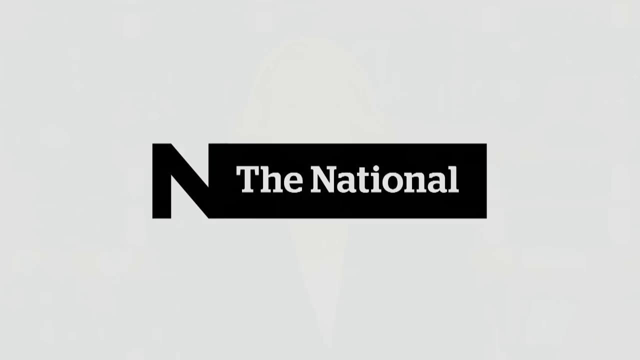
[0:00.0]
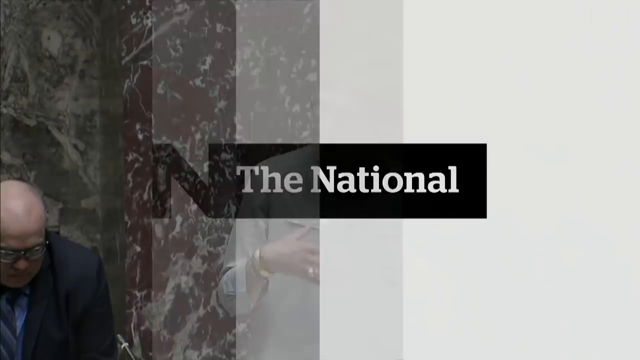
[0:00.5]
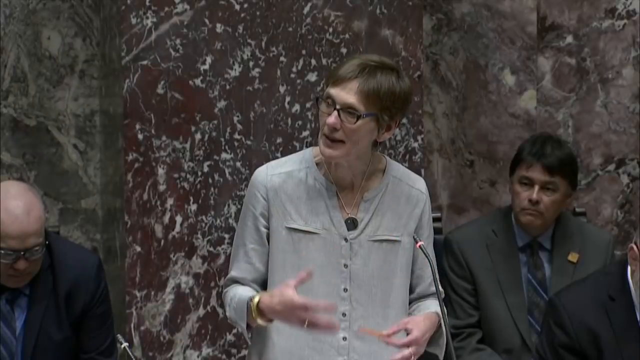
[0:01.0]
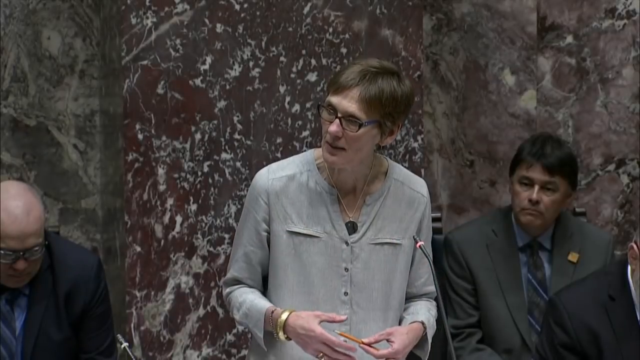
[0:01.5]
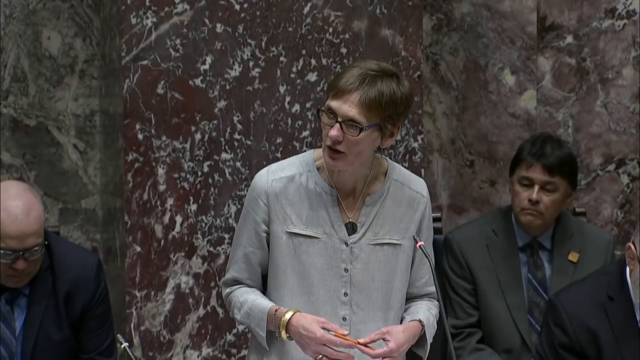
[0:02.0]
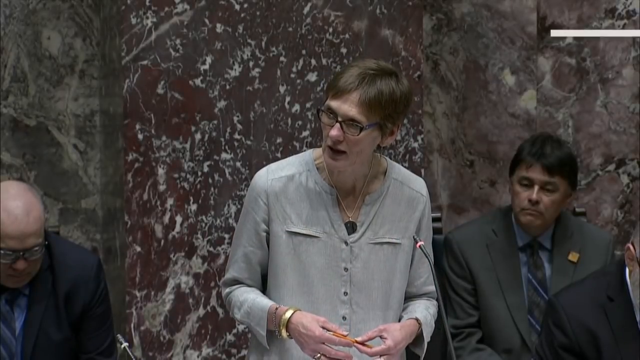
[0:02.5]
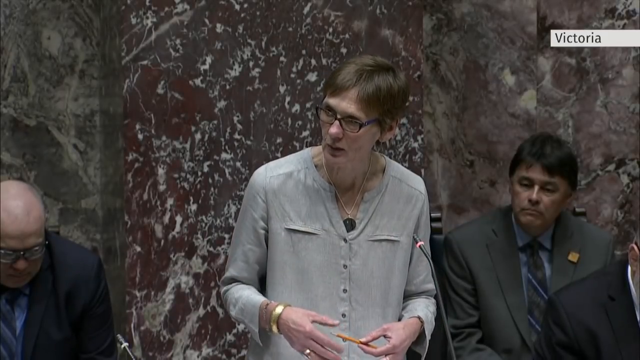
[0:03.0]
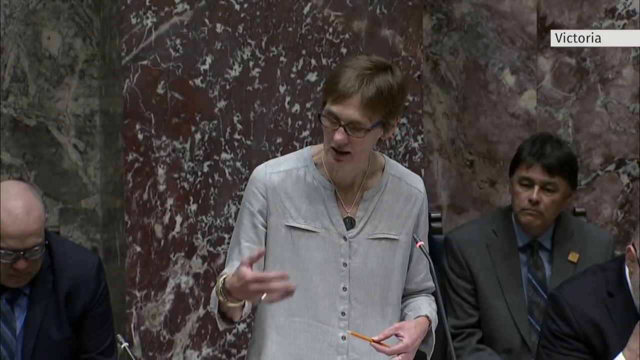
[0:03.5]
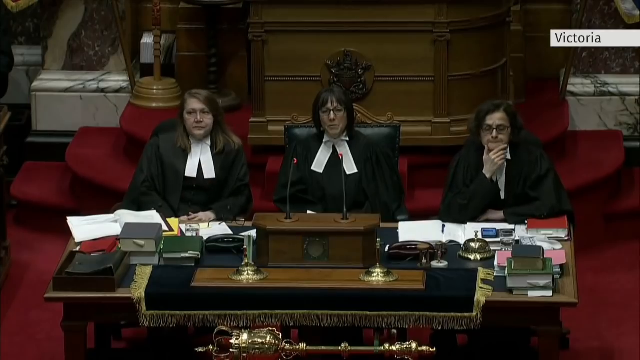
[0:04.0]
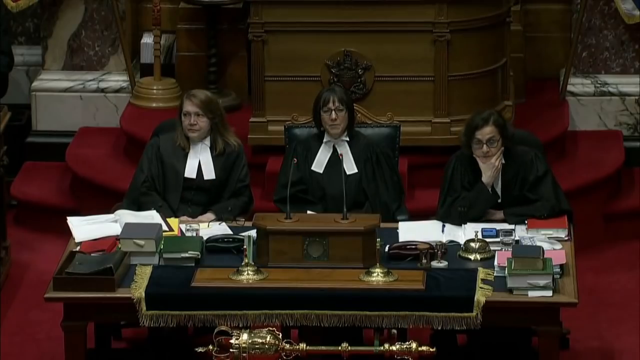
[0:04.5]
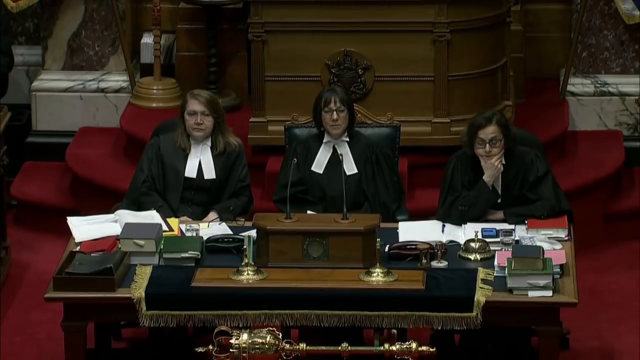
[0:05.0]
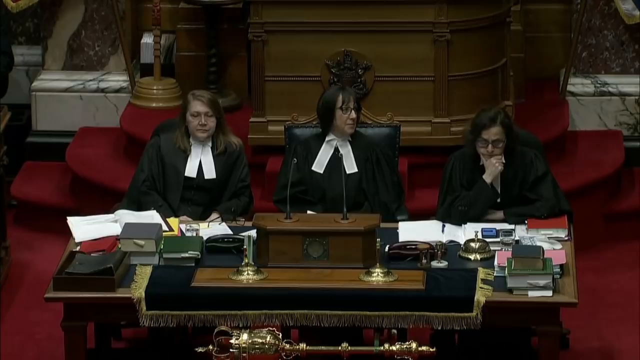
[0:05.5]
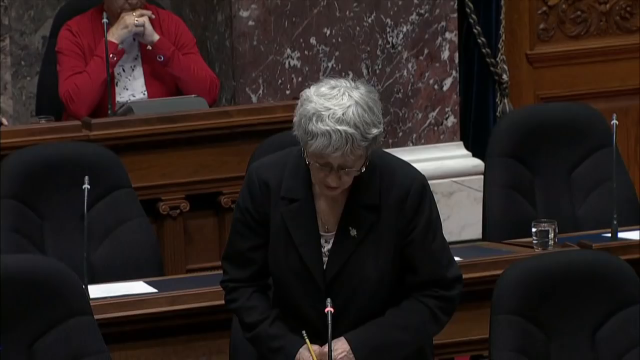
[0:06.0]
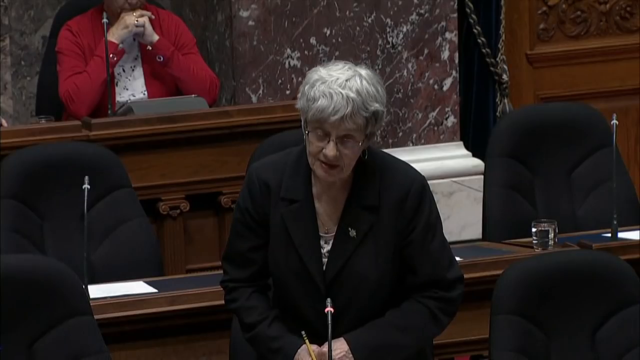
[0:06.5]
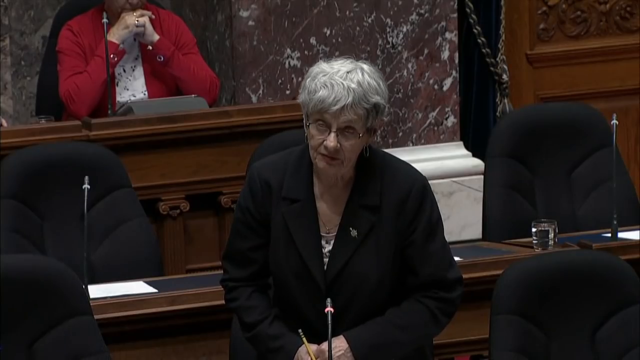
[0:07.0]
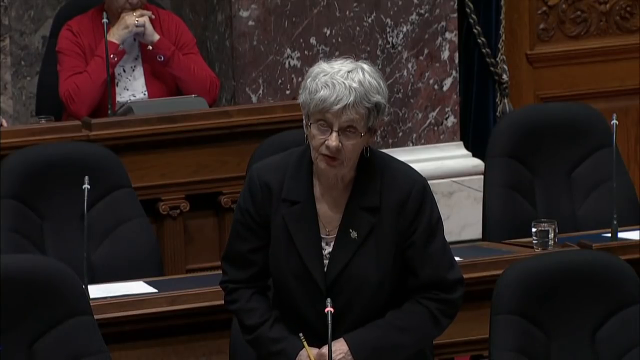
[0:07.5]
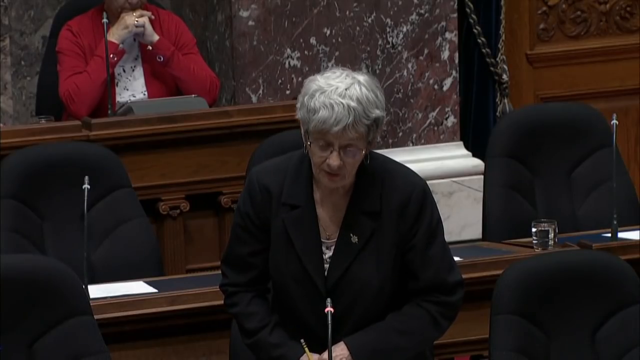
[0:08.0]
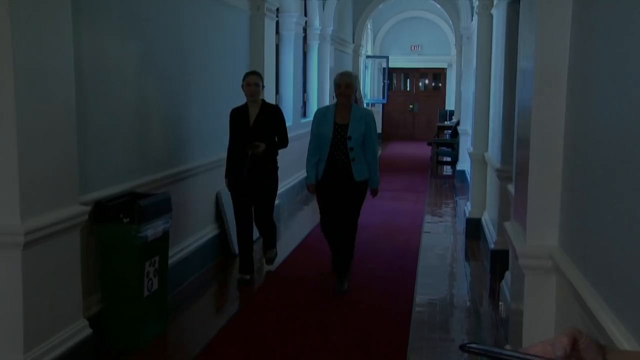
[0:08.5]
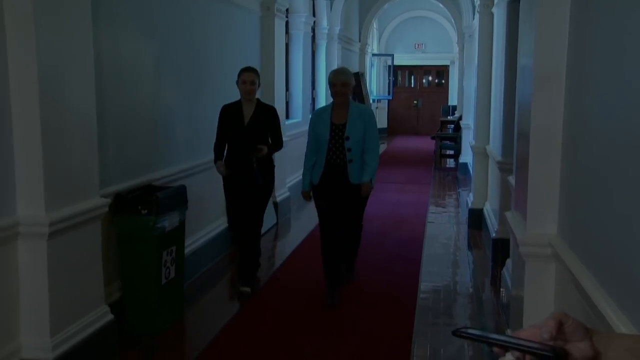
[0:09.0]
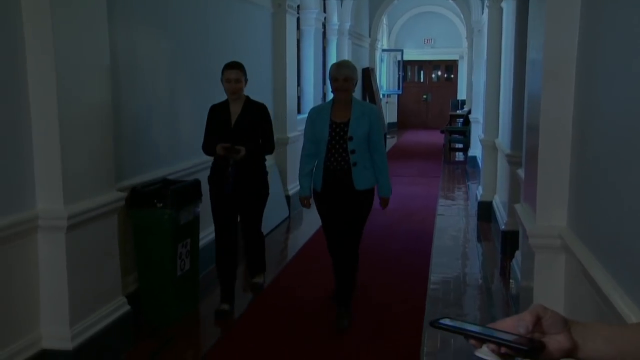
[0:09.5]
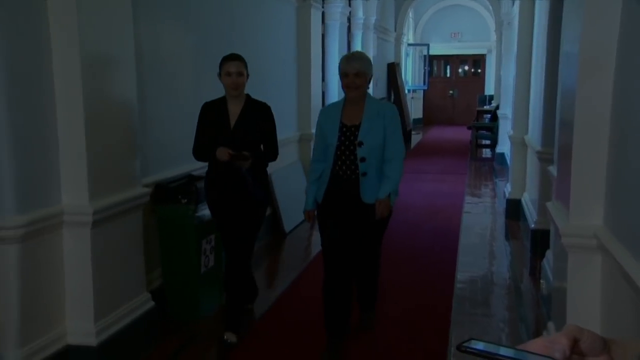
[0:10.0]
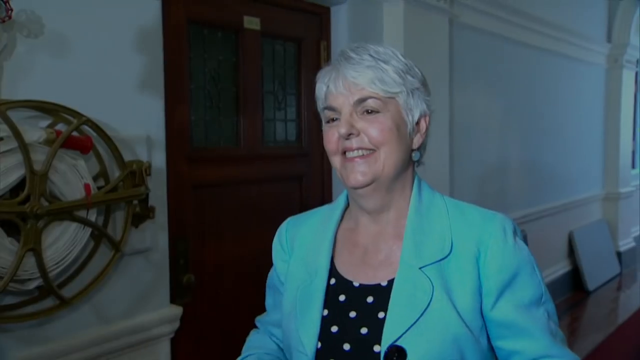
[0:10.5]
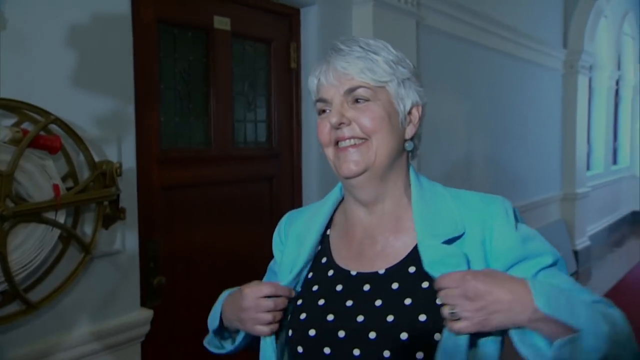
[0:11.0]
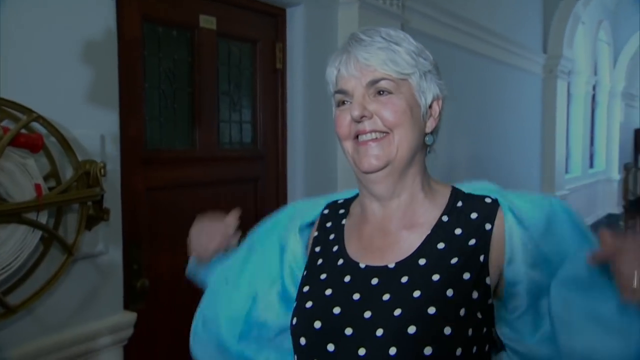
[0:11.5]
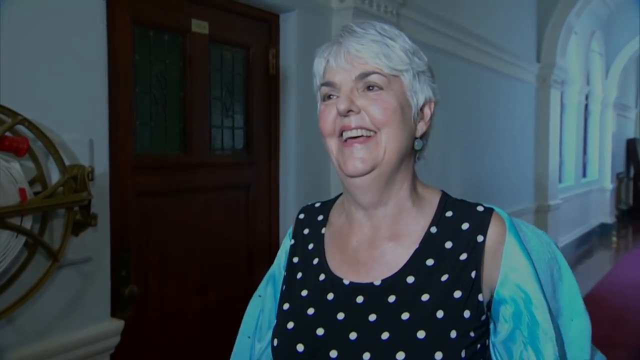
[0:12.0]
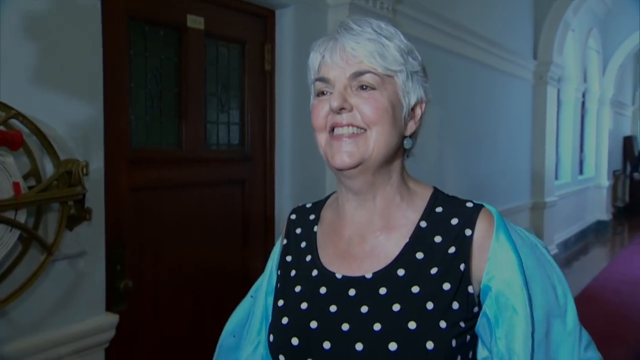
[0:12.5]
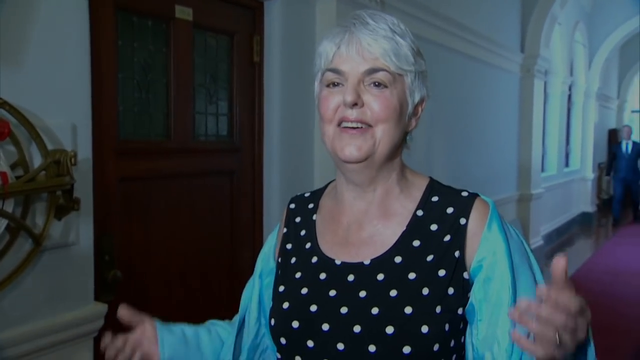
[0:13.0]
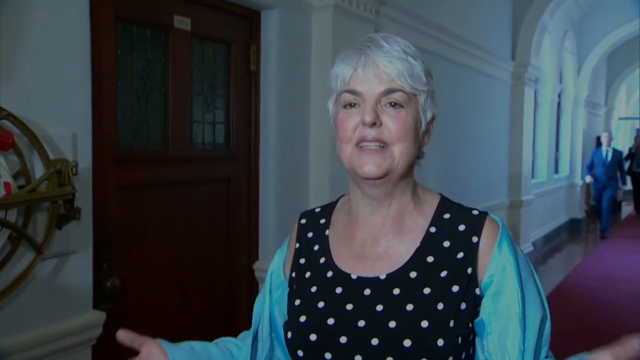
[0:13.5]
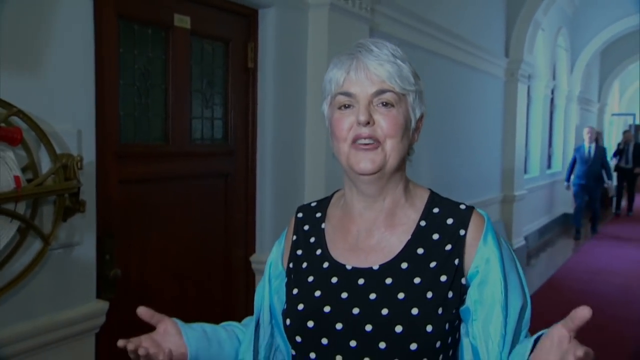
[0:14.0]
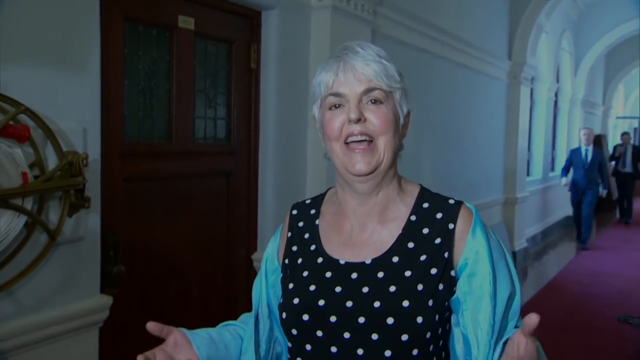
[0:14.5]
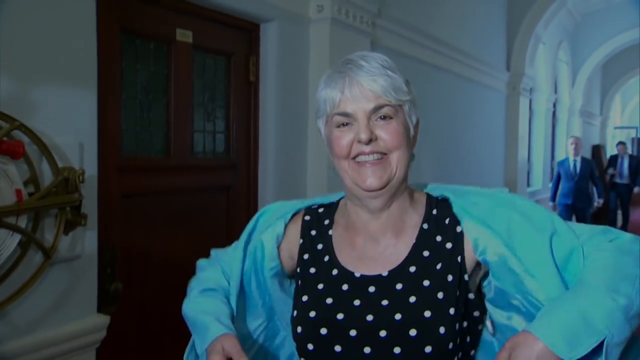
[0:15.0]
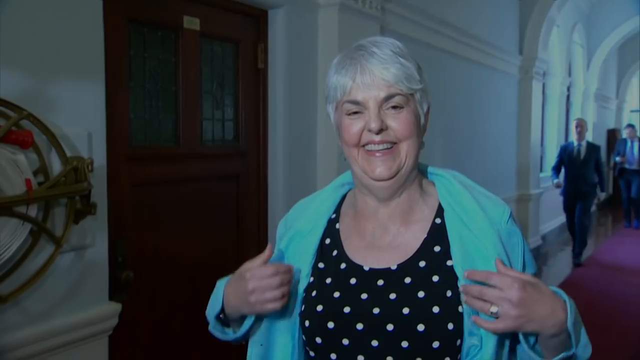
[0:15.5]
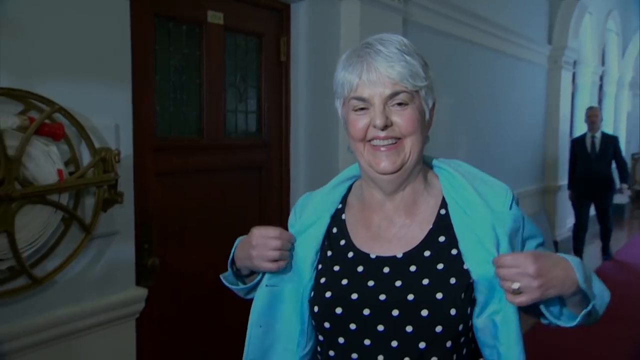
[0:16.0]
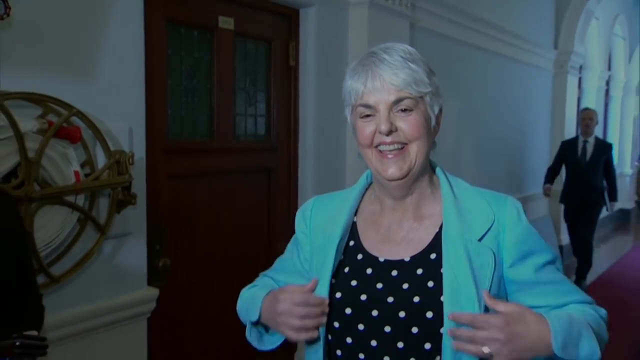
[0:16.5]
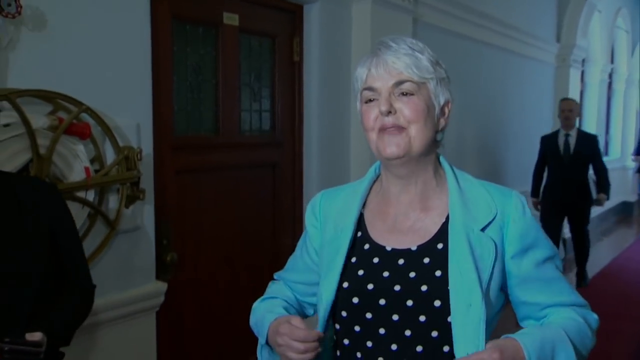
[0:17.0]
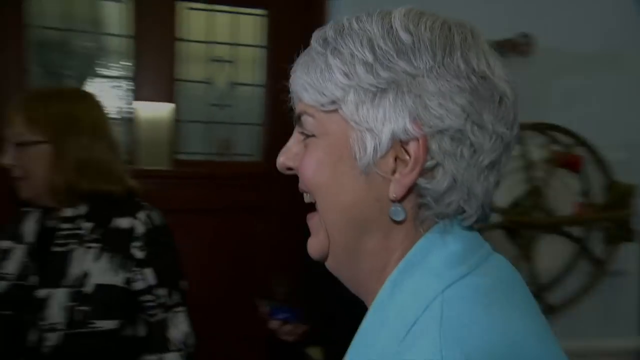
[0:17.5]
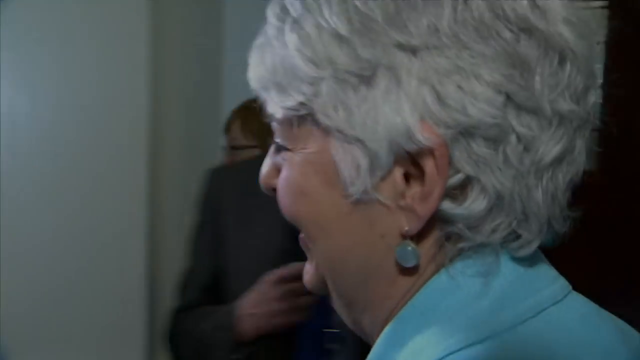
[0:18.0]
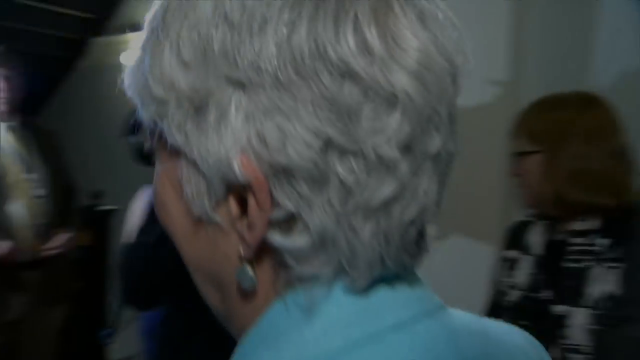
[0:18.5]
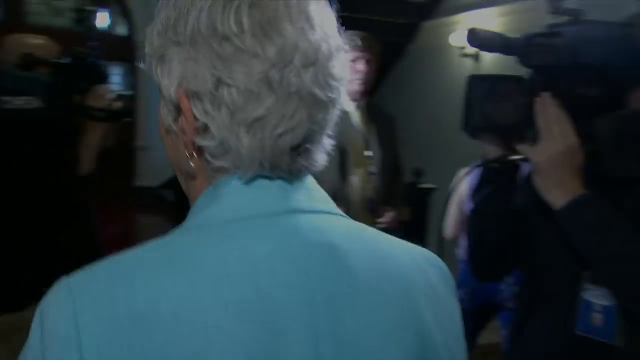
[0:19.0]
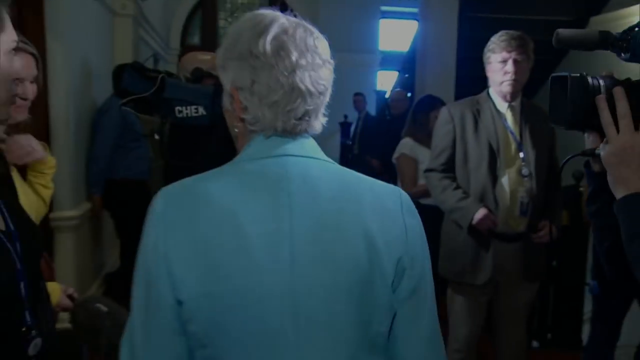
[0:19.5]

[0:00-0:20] The video, from The National, opens on a gray screen with its logo in the middle. It transitions to footage of a woman in her 50s or early 60s with blonde-white hair and glasses, wearing a gray shirt and speaking into a microphone, with some men sitting in the background. Another shot shows three middle-aged women sitting on a table who look like judges. Footage of an old woman speaking follows. The video then cuts to an older and a younger woman walking through a corridor towards the camera, followed by an interview with one of them, an older woman with short grey hair in a light blue blazer. She starts taking the blazer off, revealing a black tank top with big white dots, and moves her hands as she speaks. Another shot shows her walking through many people, some with video cameras.